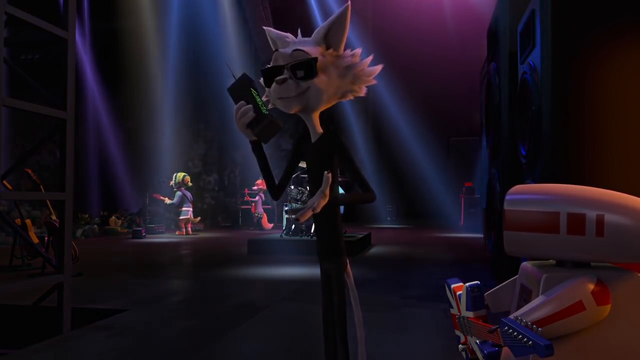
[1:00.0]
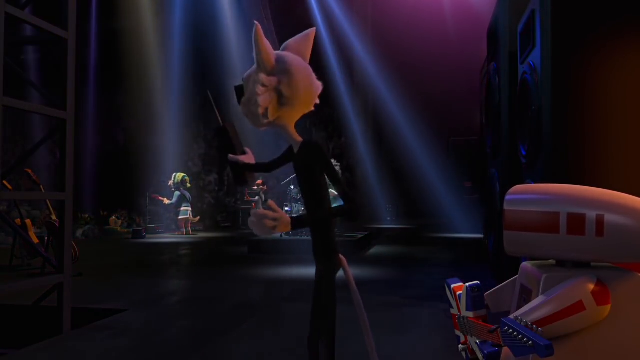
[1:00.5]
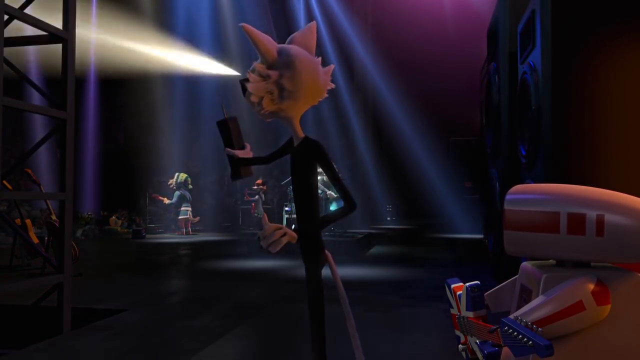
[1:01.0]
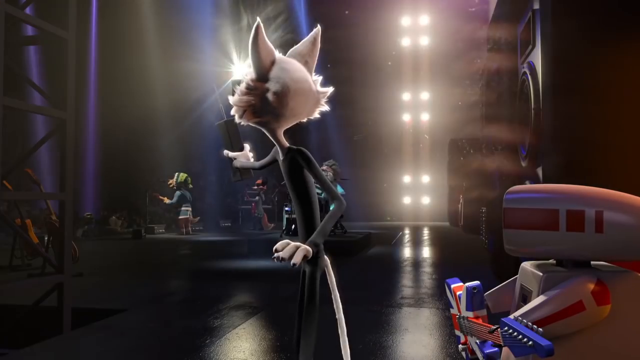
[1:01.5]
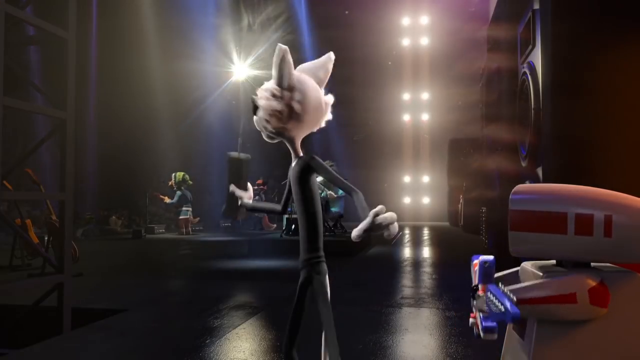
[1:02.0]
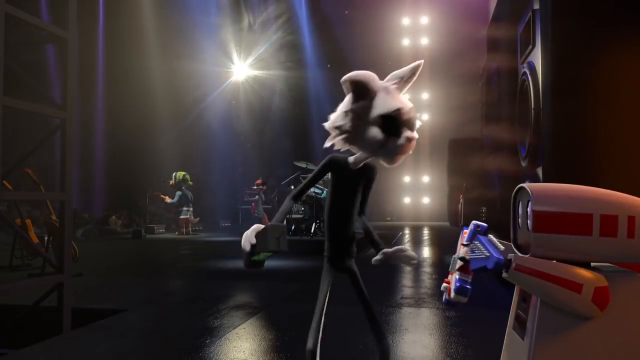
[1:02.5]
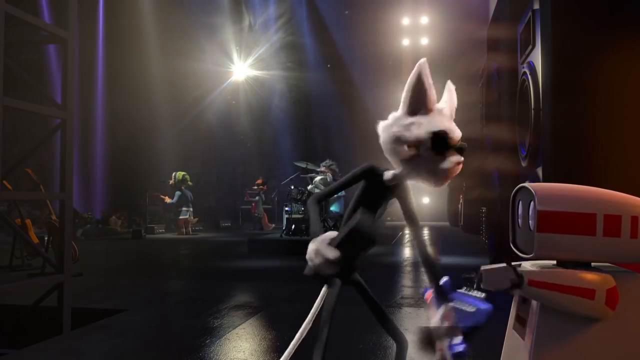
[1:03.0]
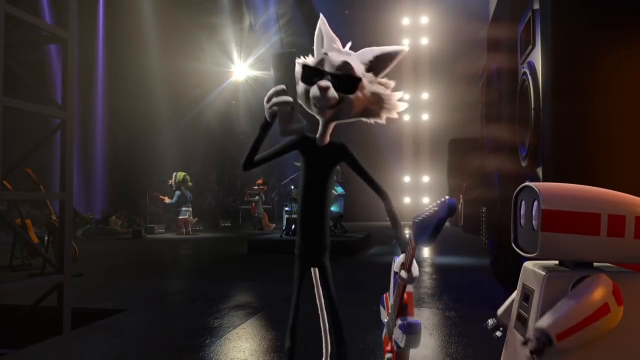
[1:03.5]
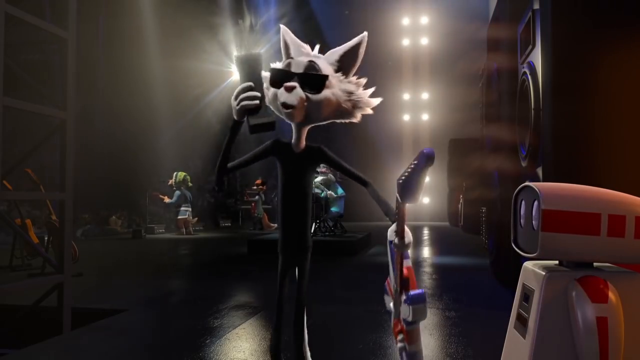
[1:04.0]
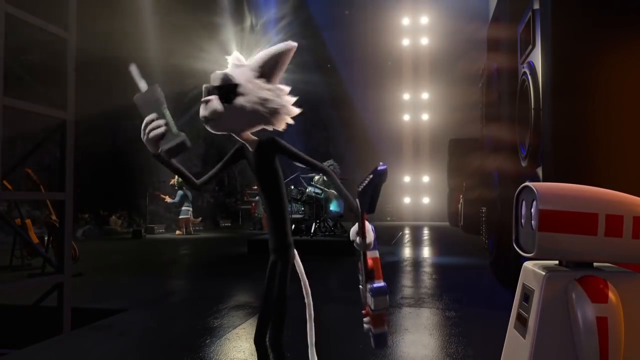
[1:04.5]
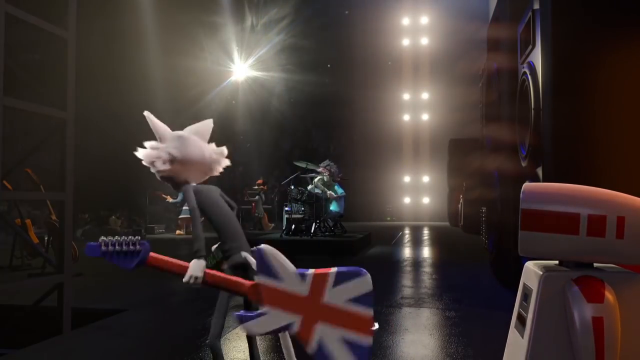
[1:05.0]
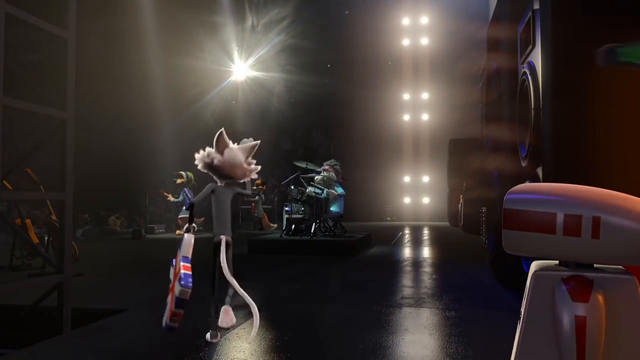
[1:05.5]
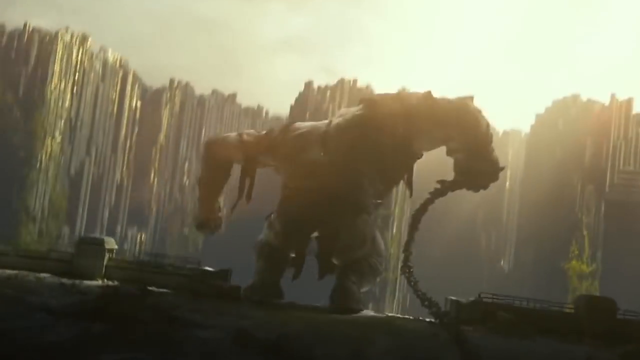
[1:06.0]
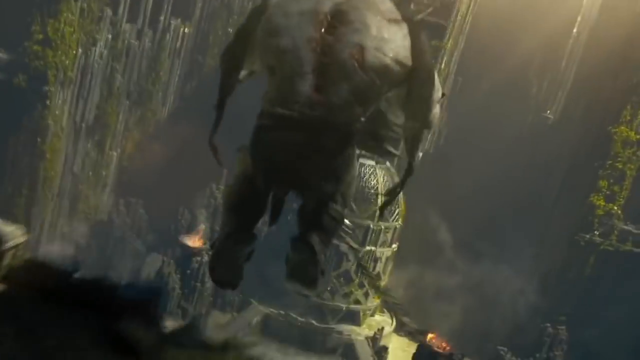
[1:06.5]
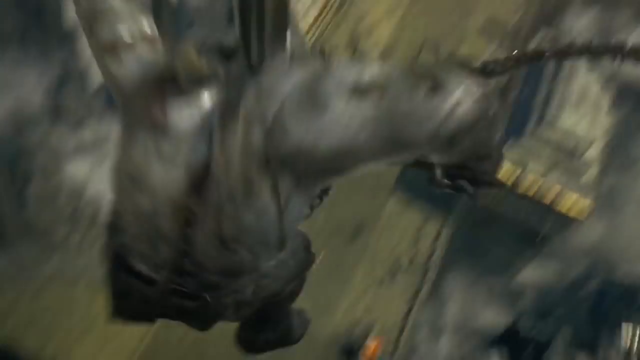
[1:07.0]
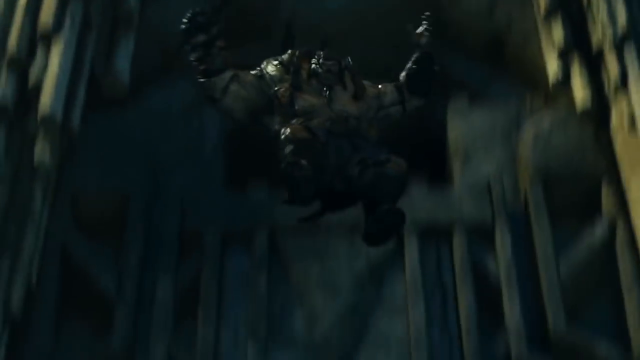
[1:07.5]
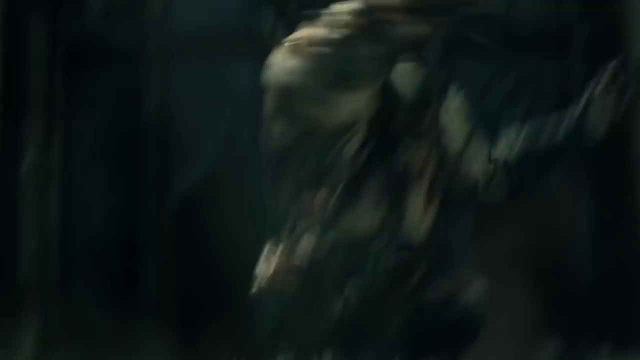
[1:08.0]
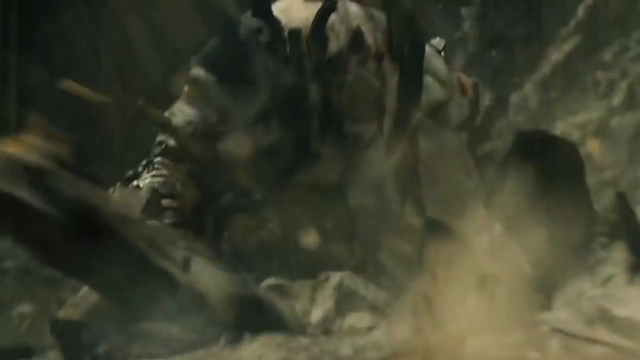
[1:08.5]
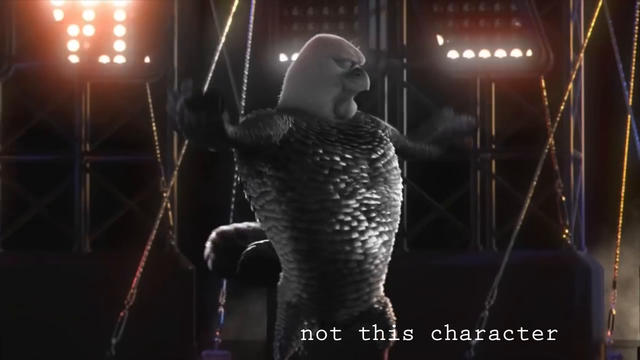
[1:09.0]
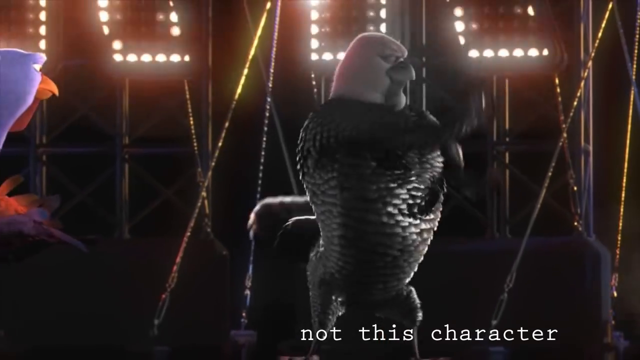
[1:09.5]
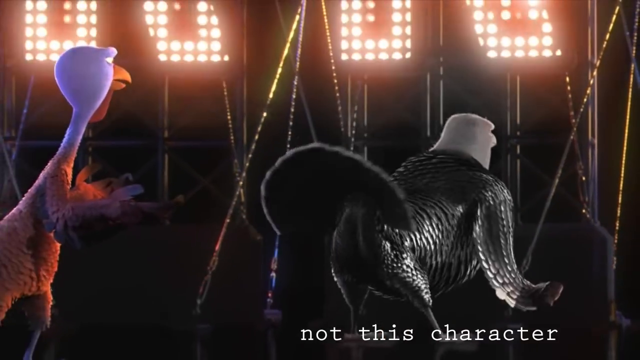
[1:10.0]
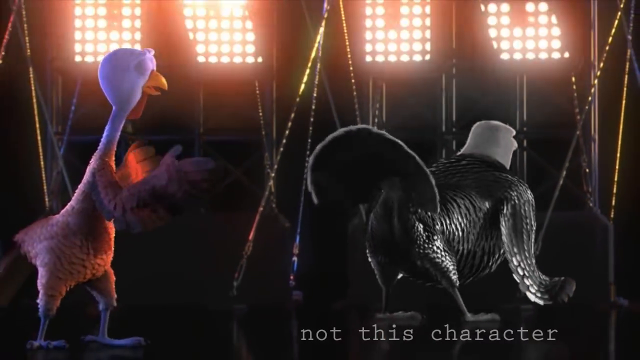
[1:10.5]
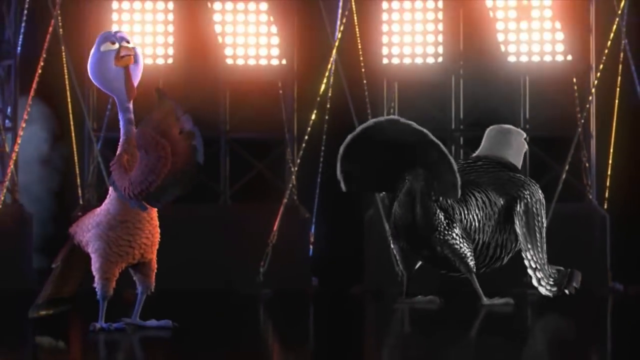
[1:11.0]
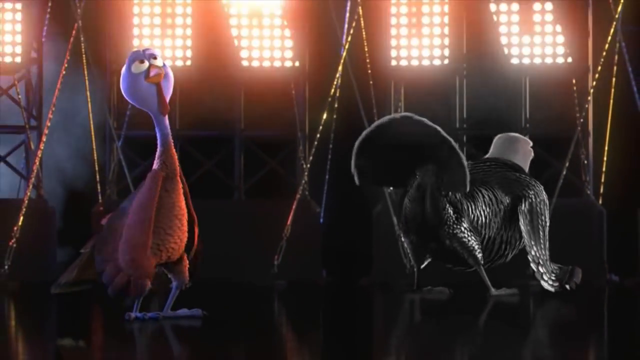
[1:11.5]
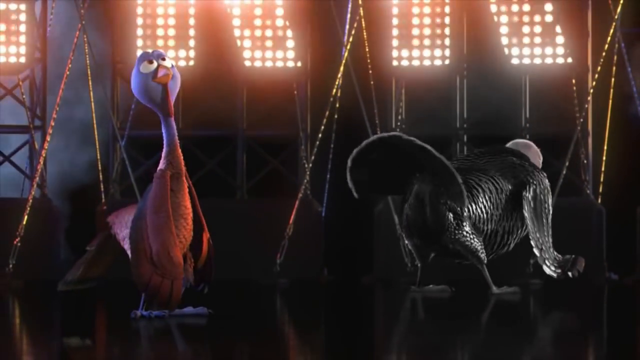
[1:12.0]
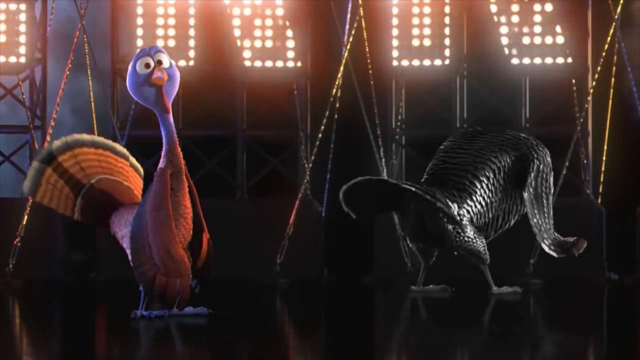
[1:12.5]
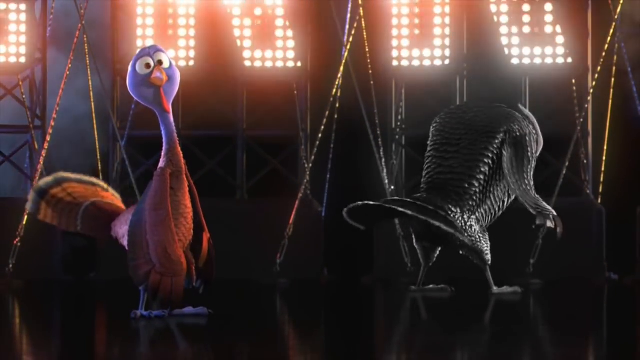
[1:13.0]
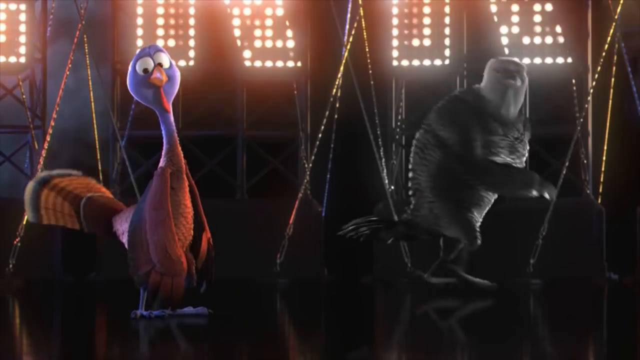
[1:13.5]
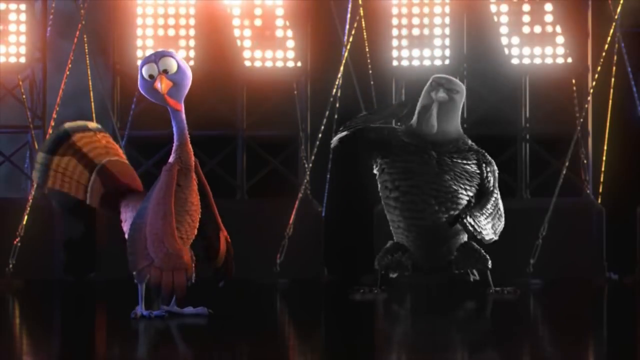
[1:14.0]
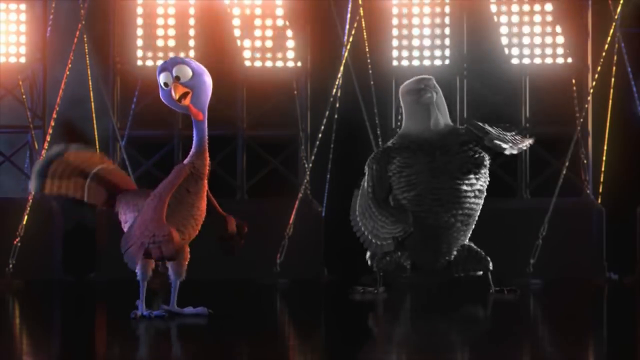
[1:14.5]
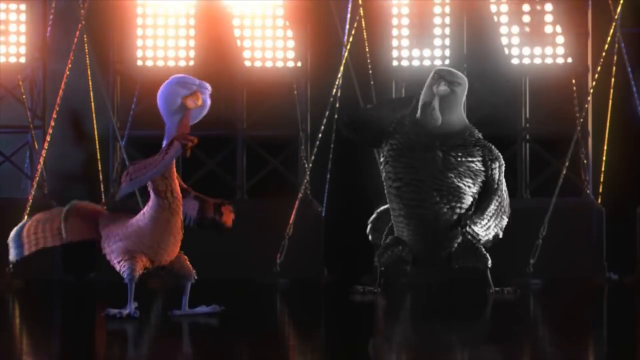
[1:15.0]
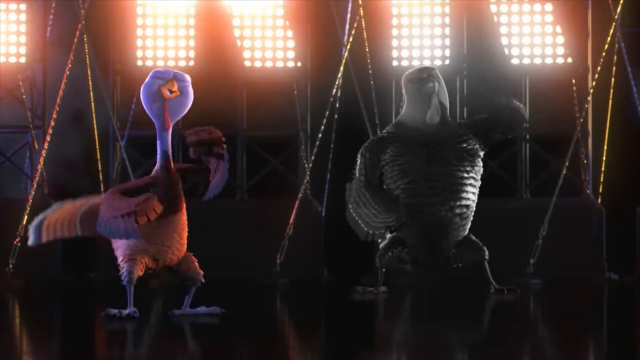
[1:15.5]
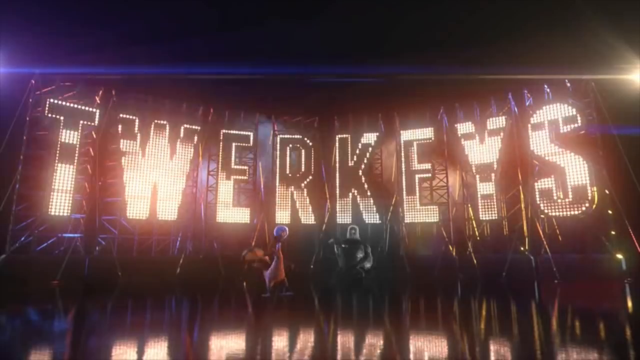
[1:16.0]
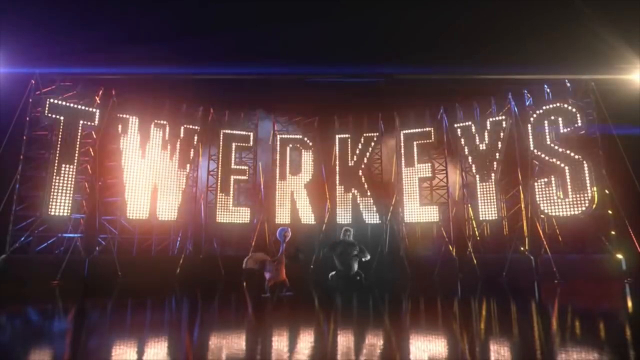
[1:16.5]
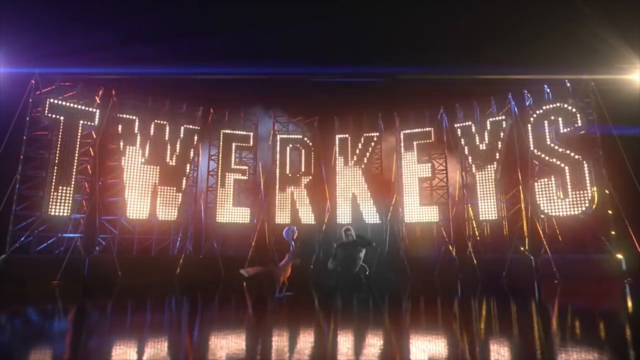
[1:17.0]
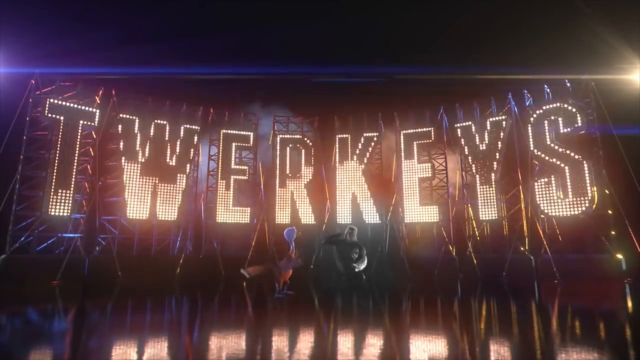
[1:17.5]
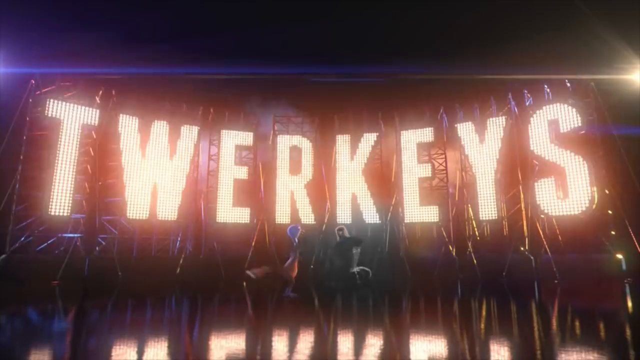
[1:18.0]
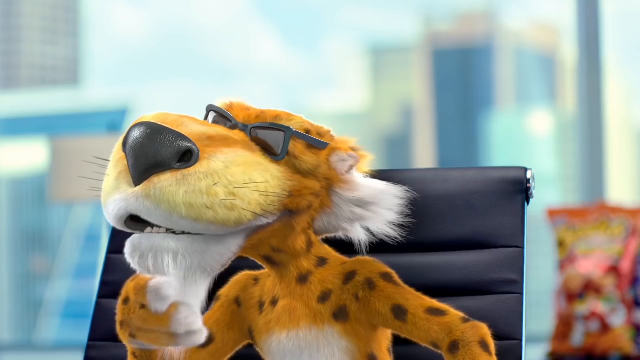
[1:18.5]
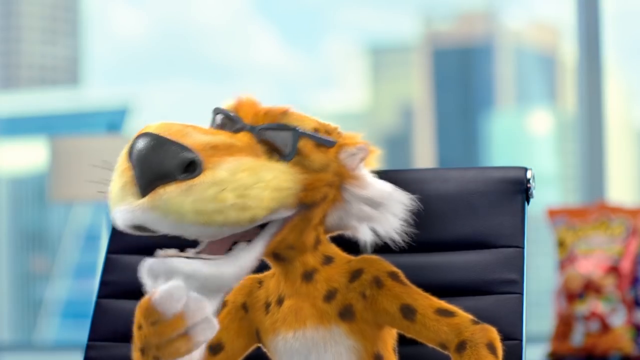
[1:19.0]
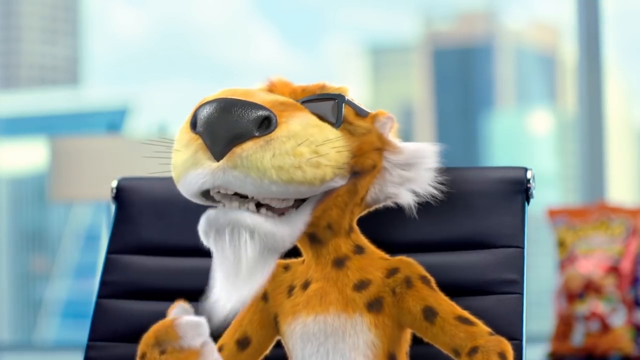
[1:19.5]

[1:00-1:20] The white cat stands at the back of the stage wearing his sunglasses while the dog performs up in the spotlight, singing. To the dog's right stands a fox, and they sing together under the spotlights. The cat, the producer, has let the person on the phone listen to the concert; he then slings the phone aside and grabs a guitar. The scene changes to a large monster, seemingly larger than the Hulk, jumping from a ceiling. Next, a black rooster shakes his butt for a purple-faced pigeon, dancing, and the pigeon starts dancing too. A leopard watching from the side starts rubbing his chin, seemingly thinking he is about to have a good dinner.